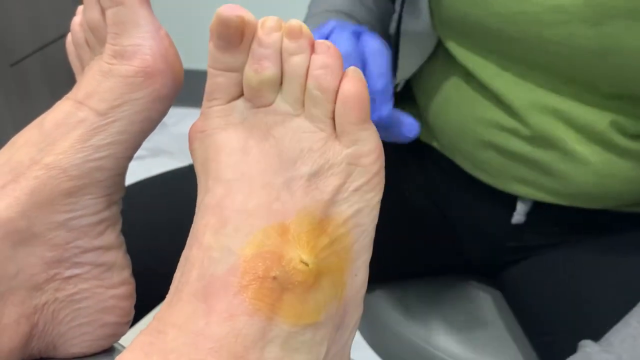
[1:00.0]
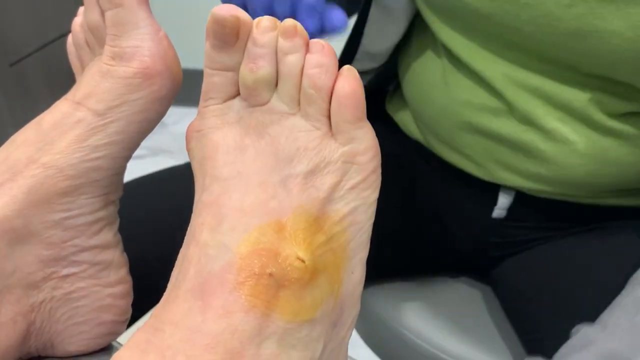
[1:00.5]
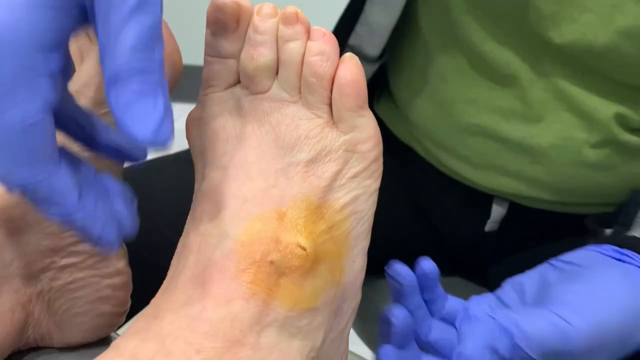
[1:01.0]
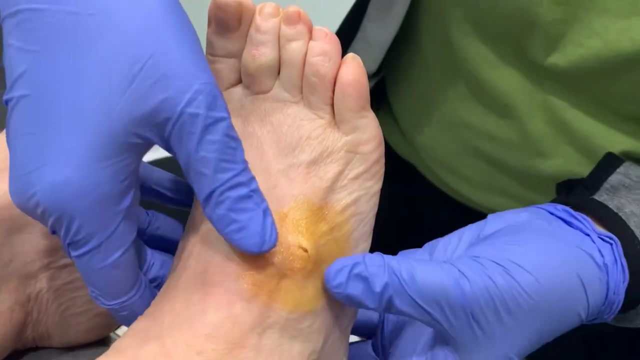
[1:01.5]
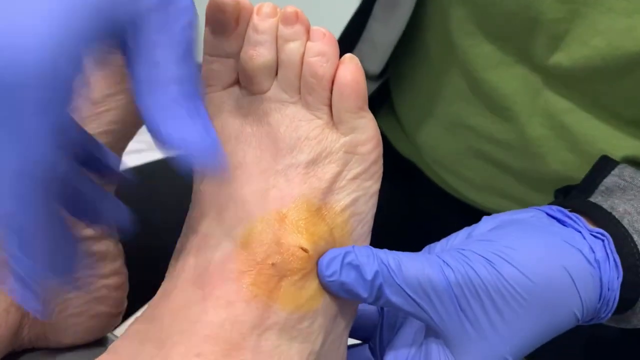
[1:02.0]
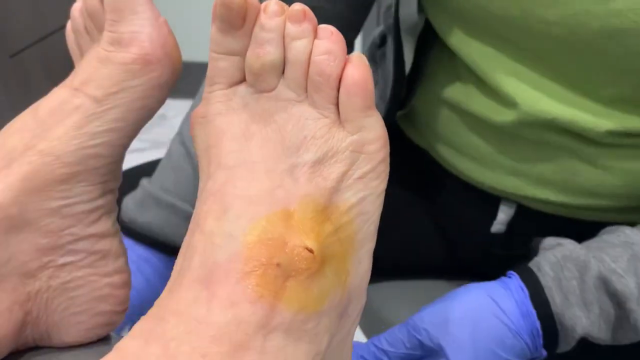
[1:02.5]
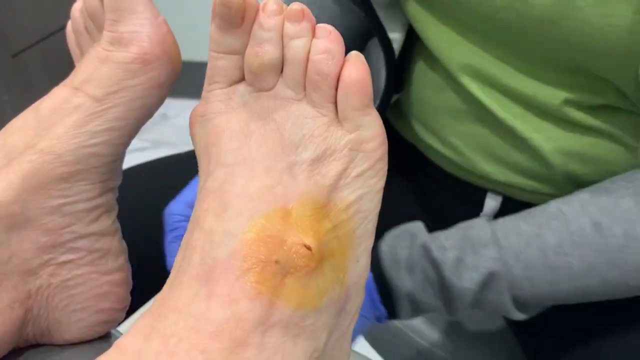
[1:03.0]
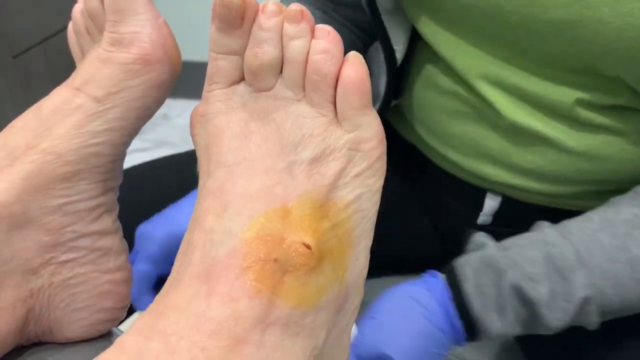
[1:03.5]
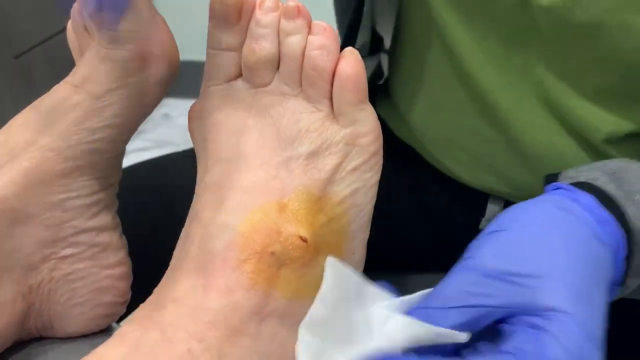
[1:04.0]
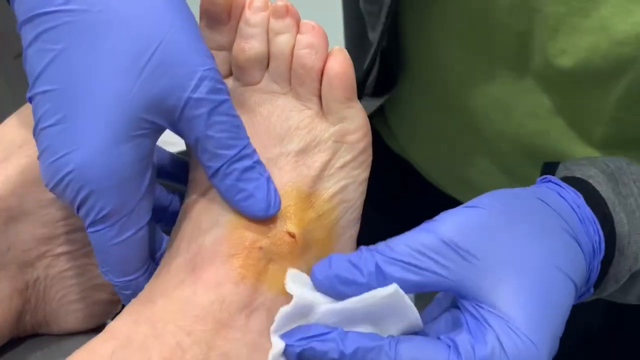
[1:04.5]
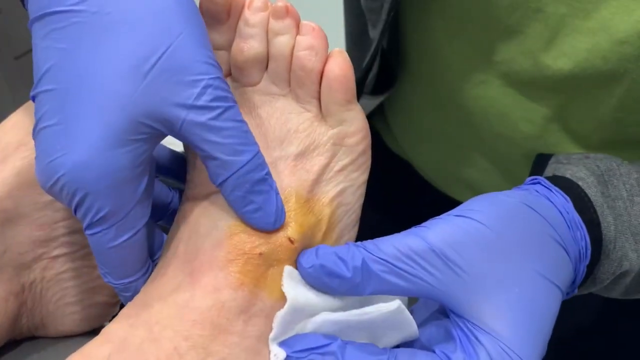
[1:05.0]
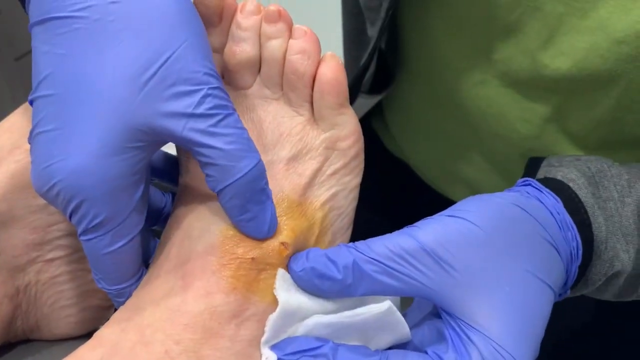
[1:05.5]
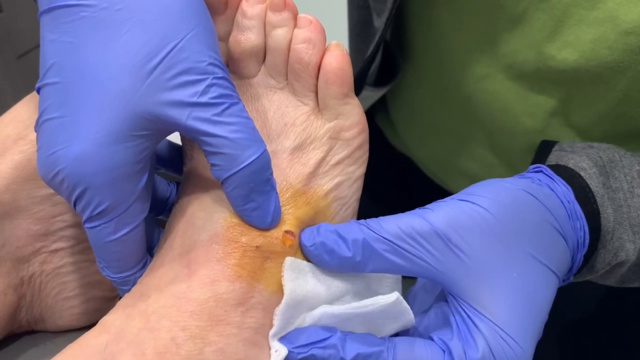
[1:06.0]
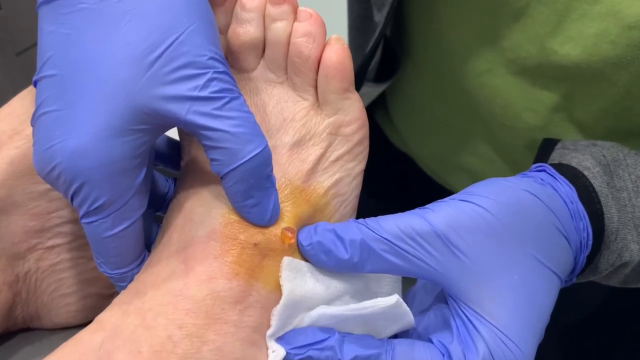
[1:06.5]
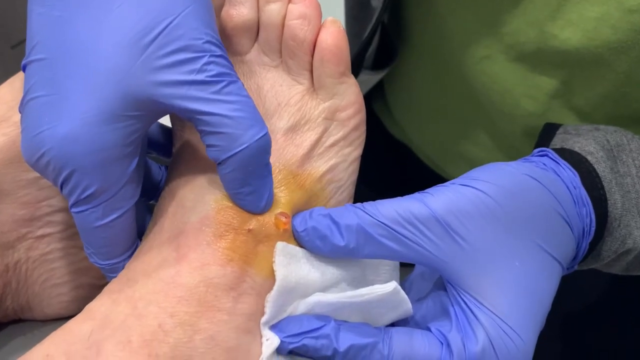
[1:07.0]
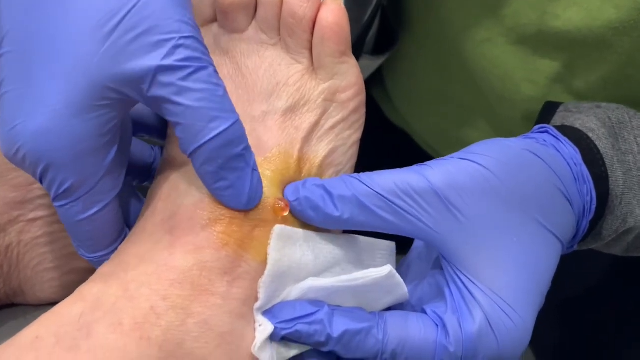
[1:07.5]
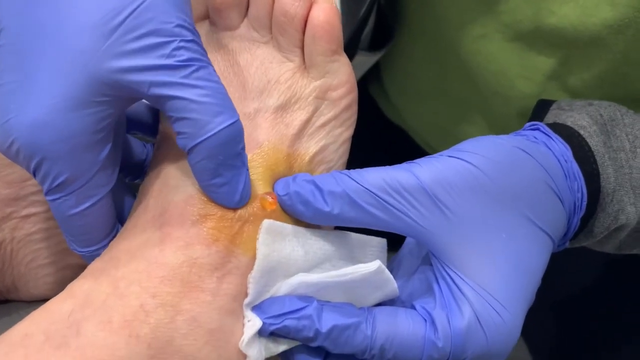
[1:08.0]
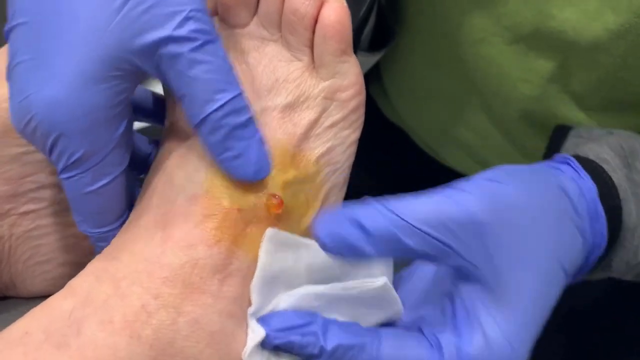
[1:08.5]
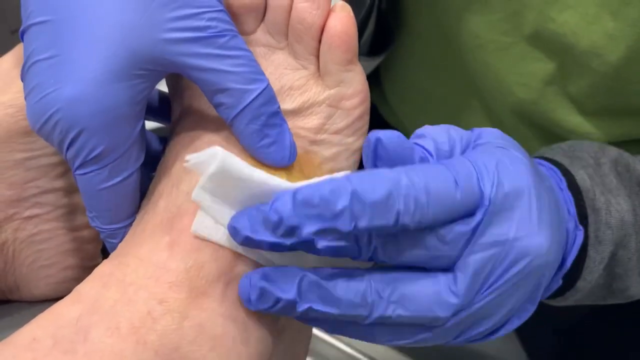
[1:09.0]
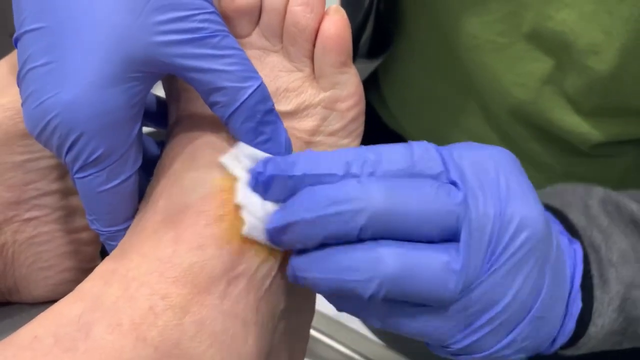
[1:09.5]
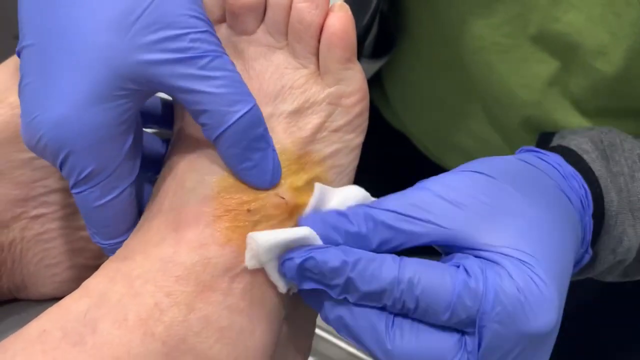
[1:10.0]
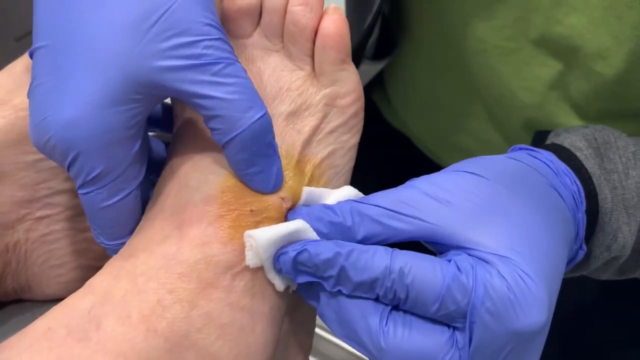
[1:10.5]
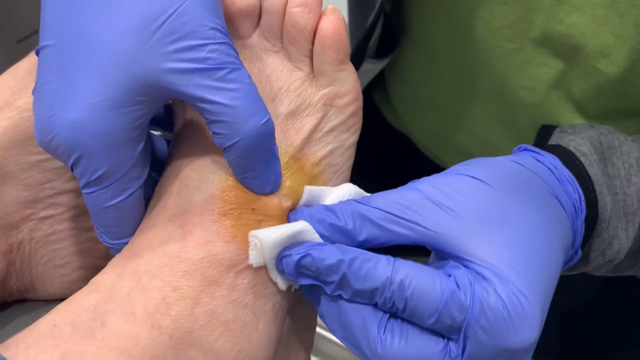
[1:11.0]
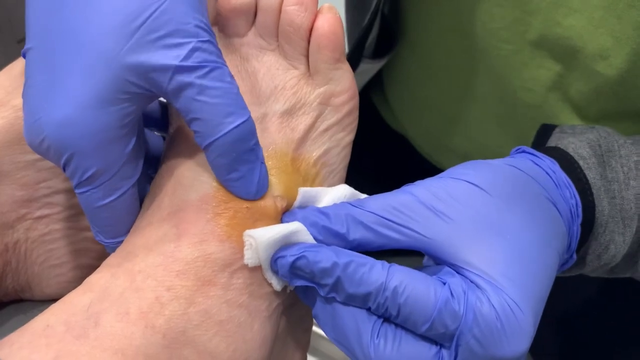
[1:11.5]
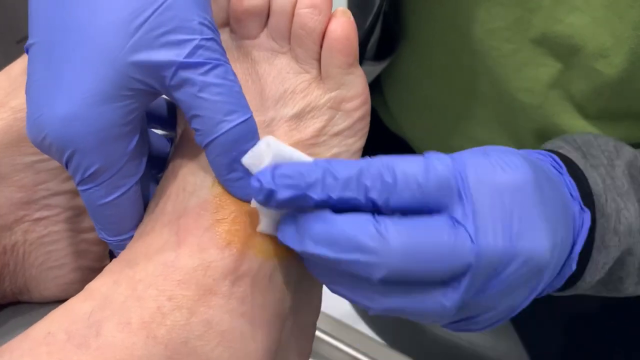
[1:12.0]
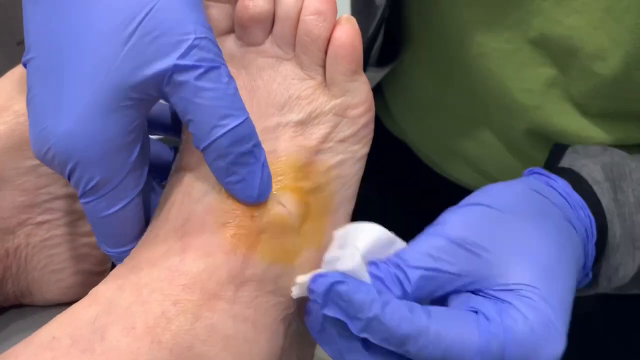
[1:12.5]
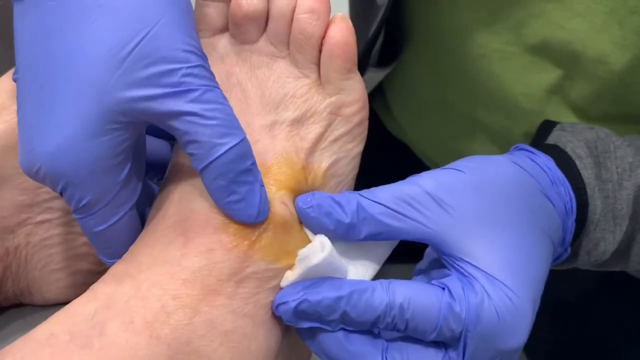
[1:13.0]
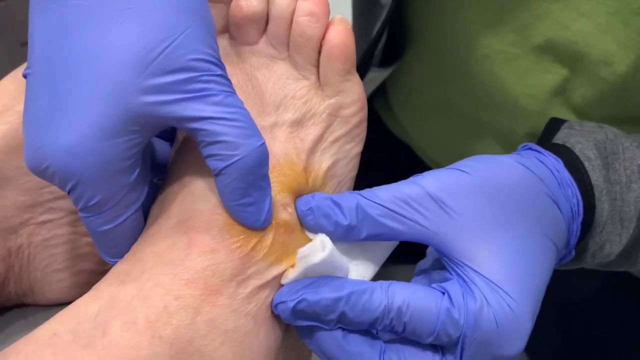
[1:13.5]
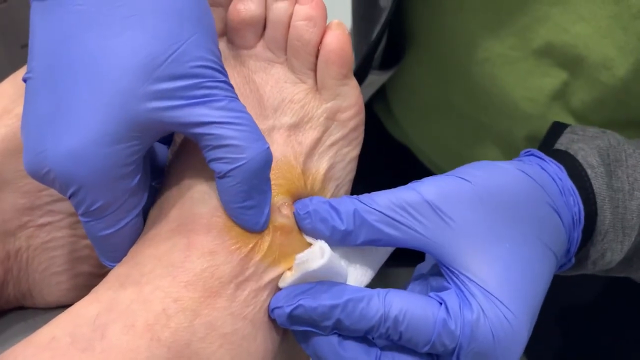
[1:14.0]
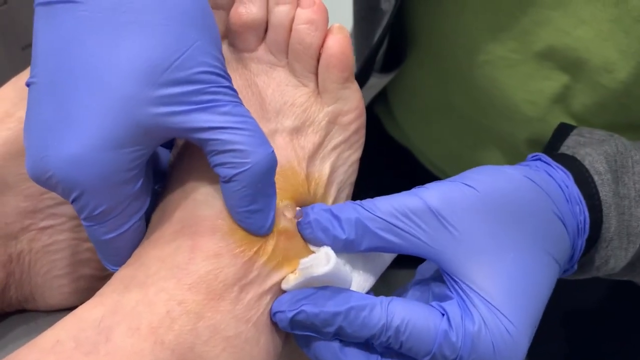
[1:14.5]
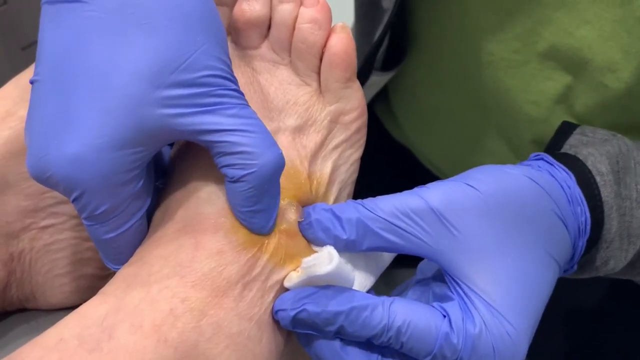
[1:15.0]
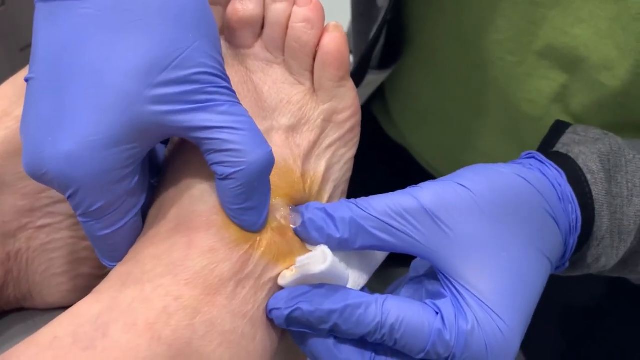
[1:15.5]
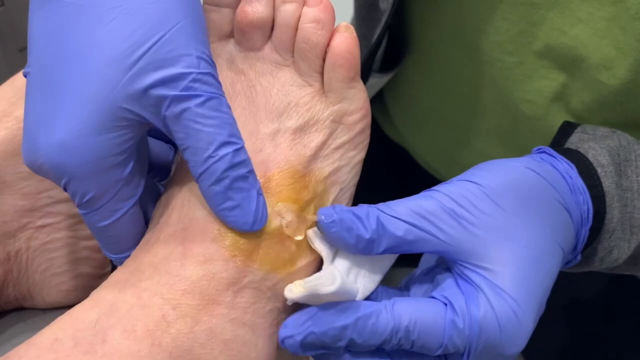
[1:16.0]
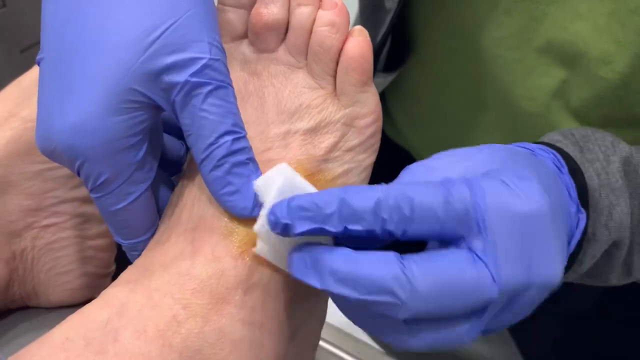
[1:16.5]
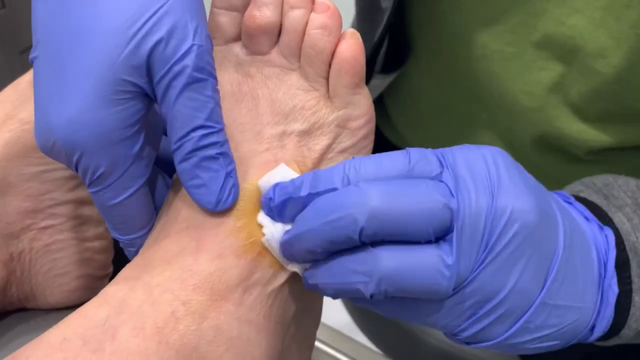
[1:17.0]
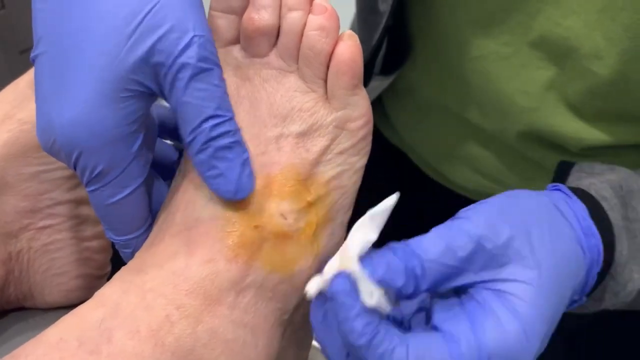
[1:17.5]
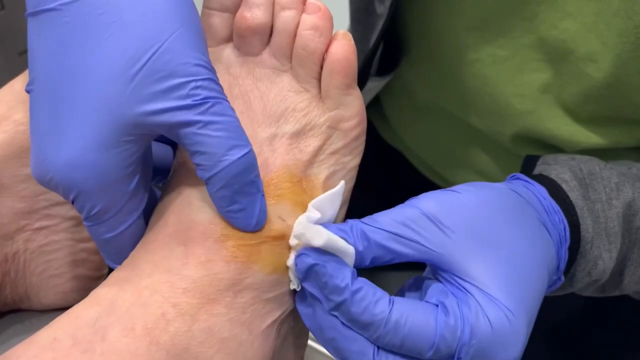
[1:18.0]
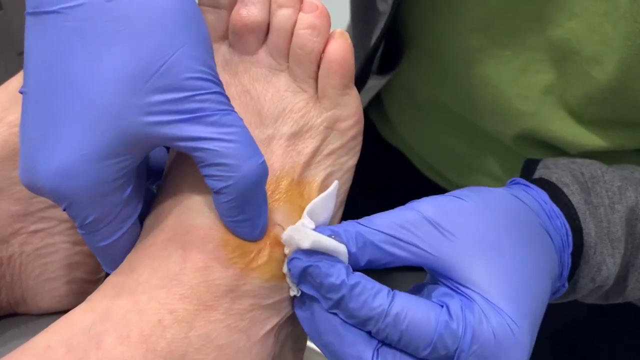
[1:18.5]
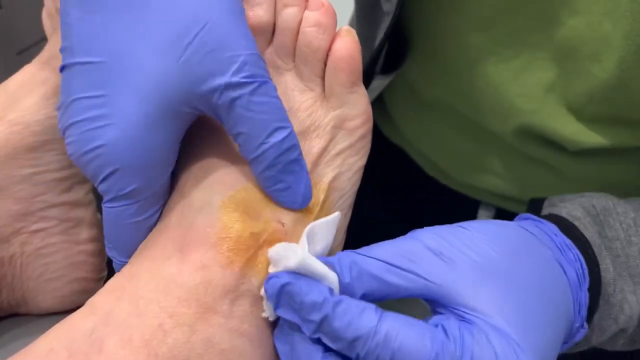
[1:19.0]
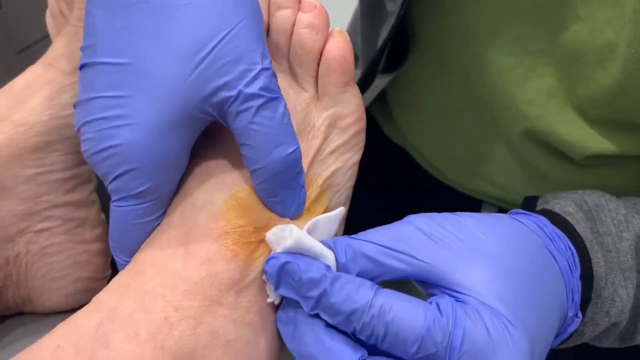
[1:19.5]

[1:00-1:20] The patient's foot has a yellow spot, and pus and gel come out of the top of the foot. The person squeezes the area to get the gel and pus out of the top of the foot. The setting is presumably a podiatry office.